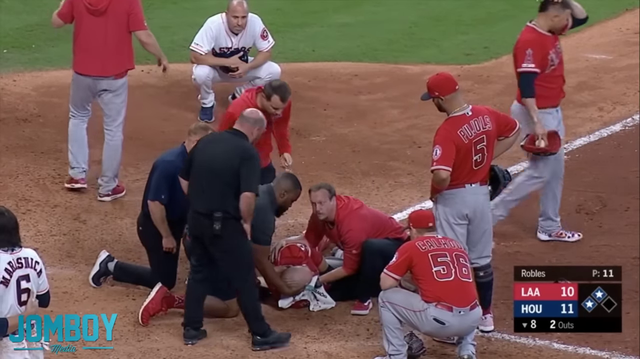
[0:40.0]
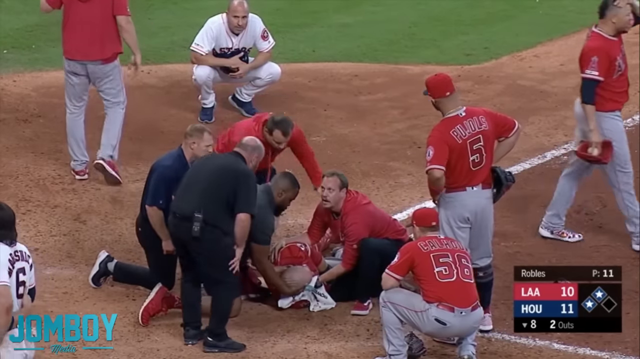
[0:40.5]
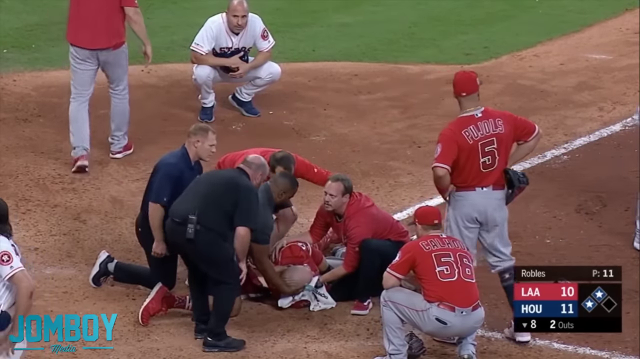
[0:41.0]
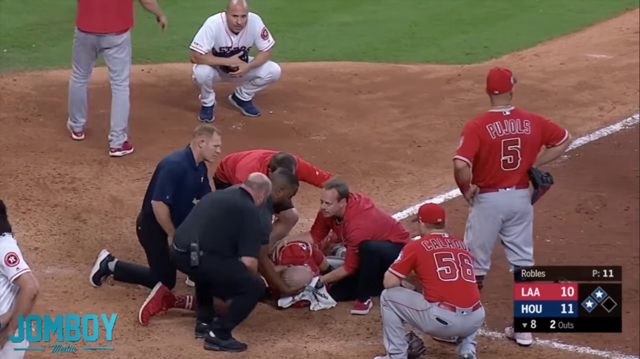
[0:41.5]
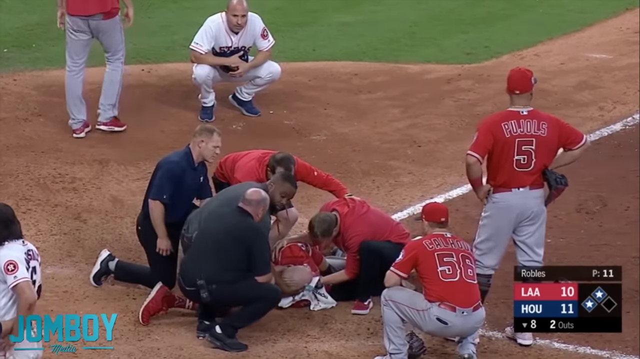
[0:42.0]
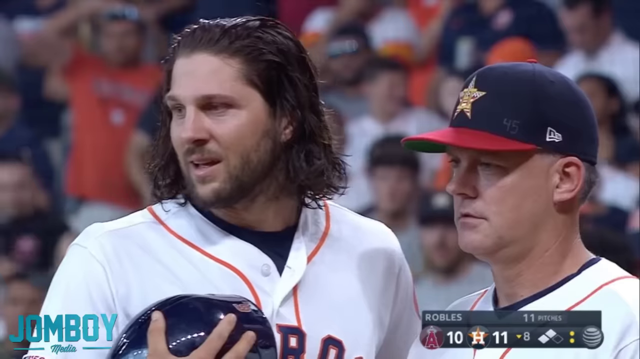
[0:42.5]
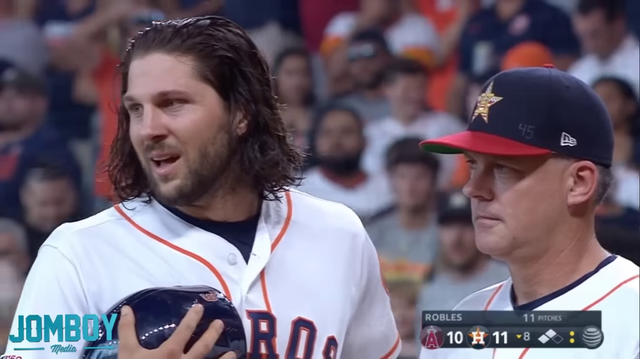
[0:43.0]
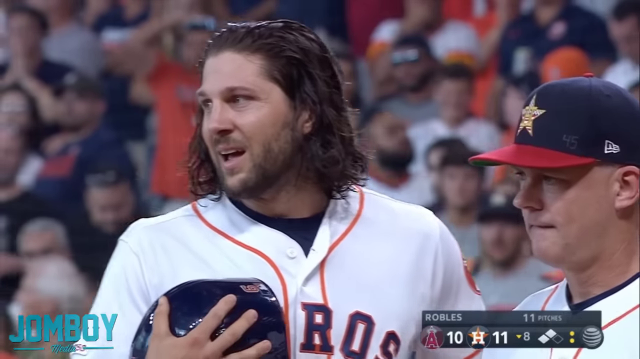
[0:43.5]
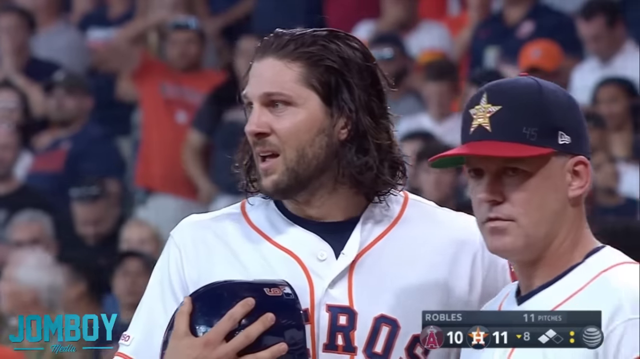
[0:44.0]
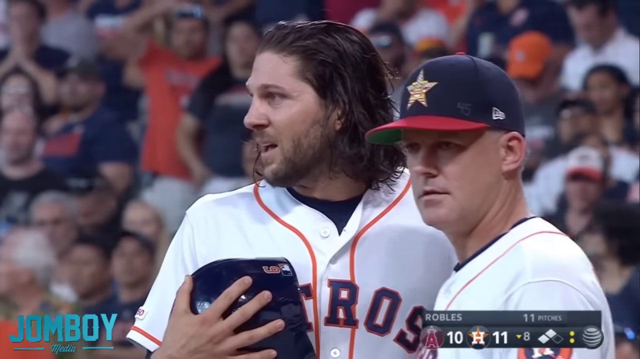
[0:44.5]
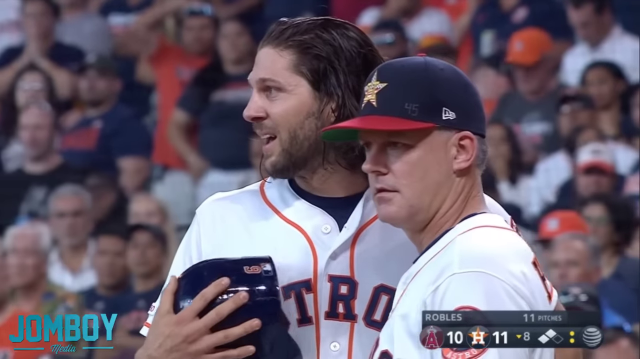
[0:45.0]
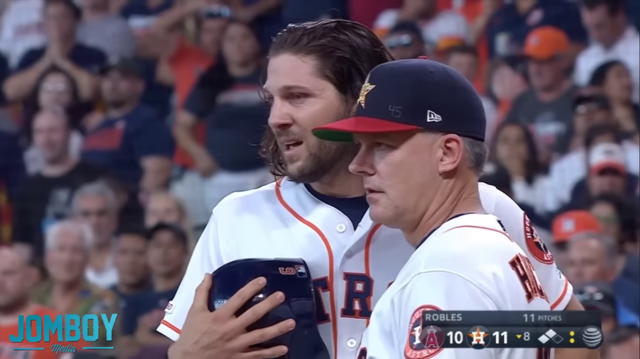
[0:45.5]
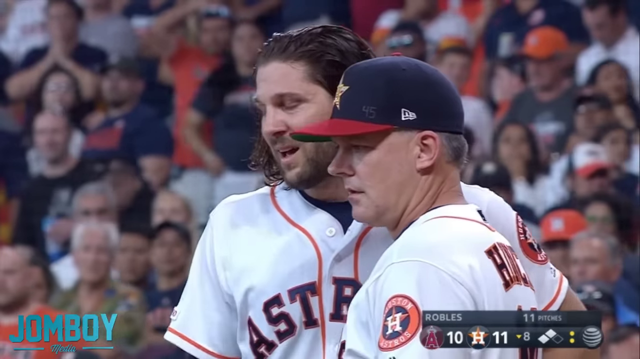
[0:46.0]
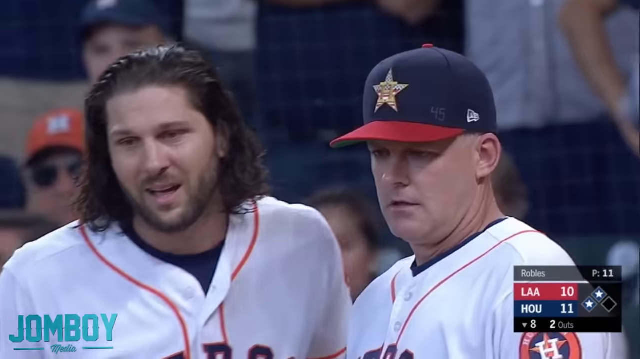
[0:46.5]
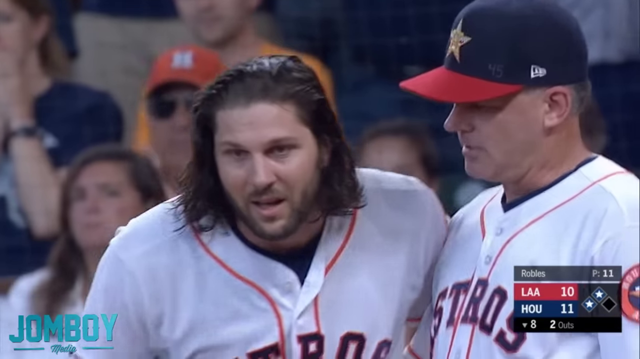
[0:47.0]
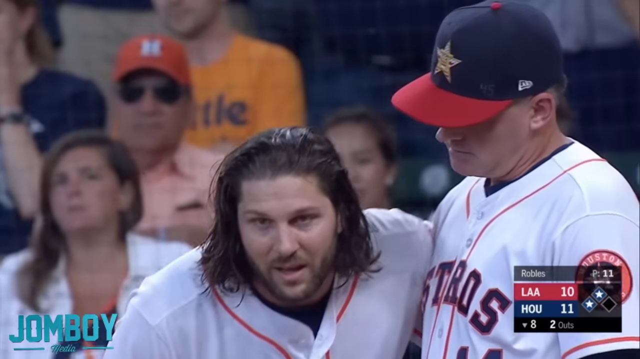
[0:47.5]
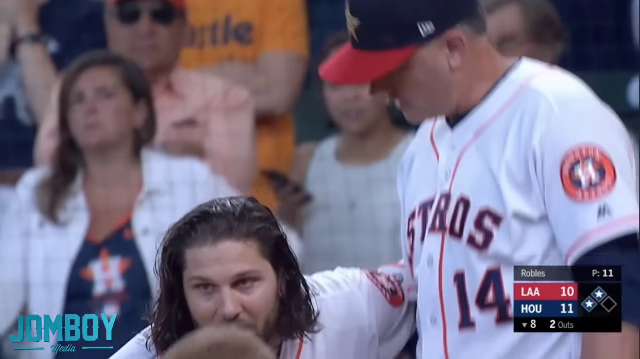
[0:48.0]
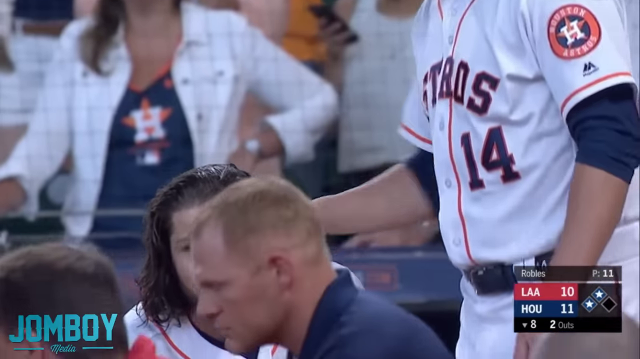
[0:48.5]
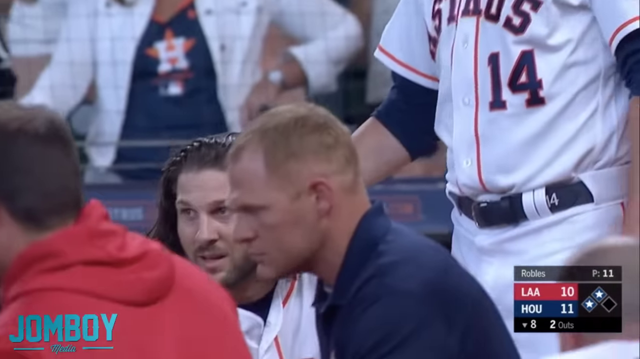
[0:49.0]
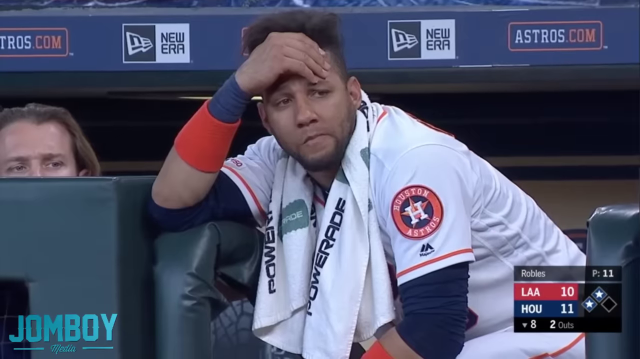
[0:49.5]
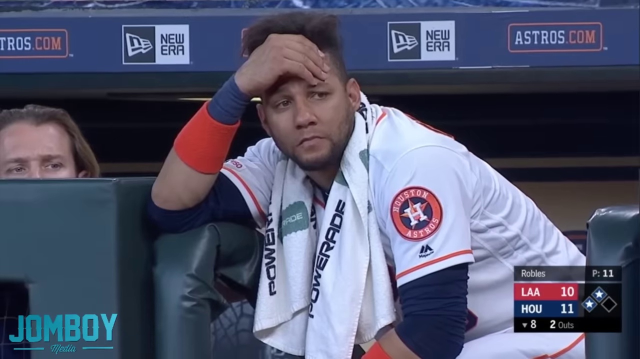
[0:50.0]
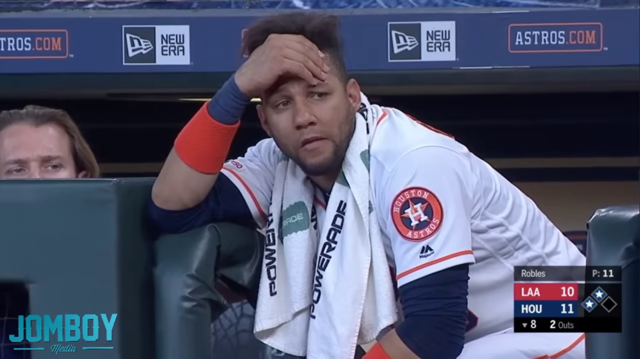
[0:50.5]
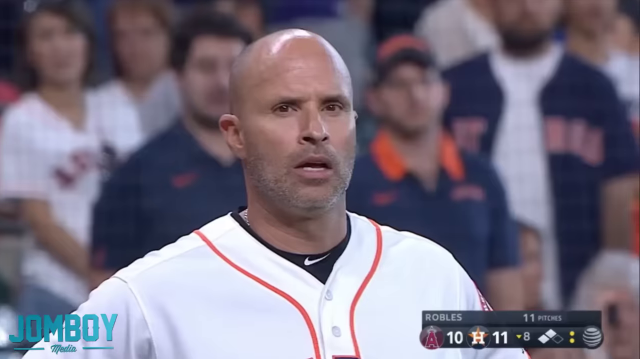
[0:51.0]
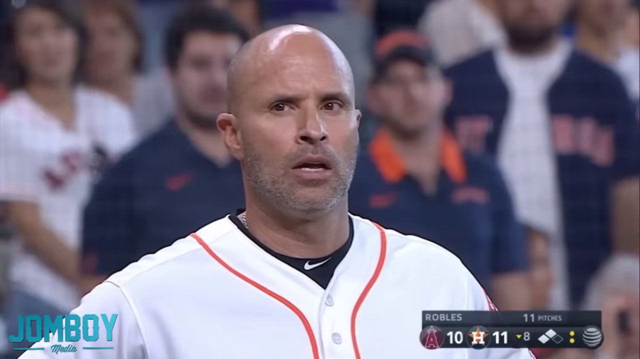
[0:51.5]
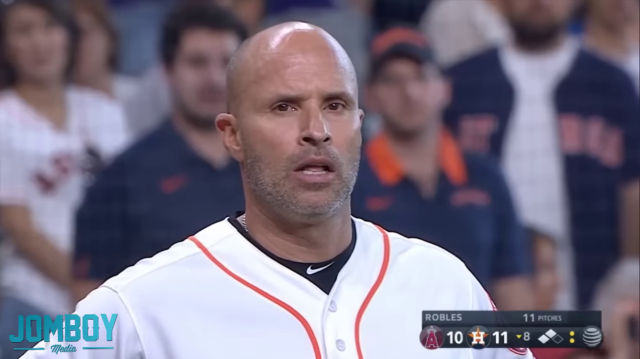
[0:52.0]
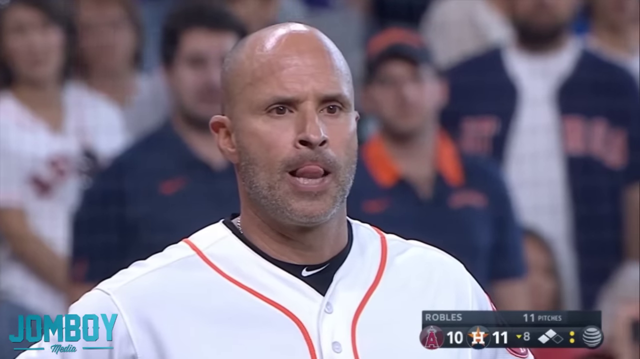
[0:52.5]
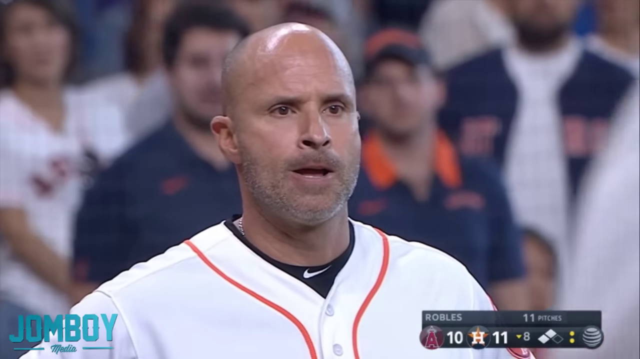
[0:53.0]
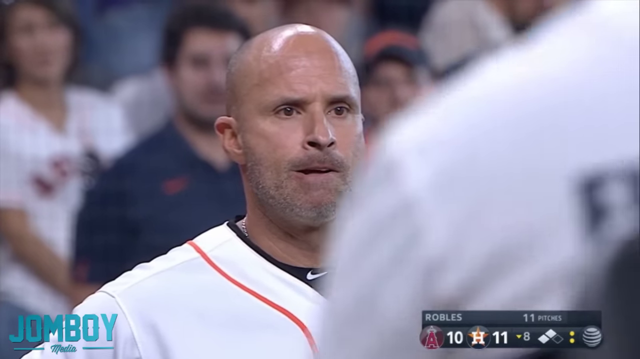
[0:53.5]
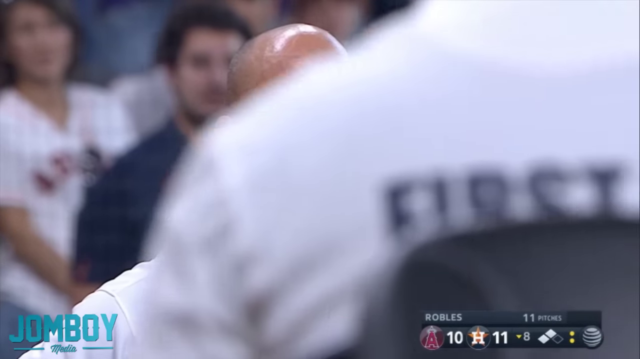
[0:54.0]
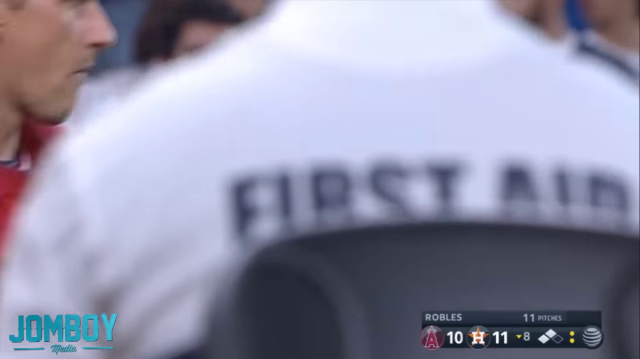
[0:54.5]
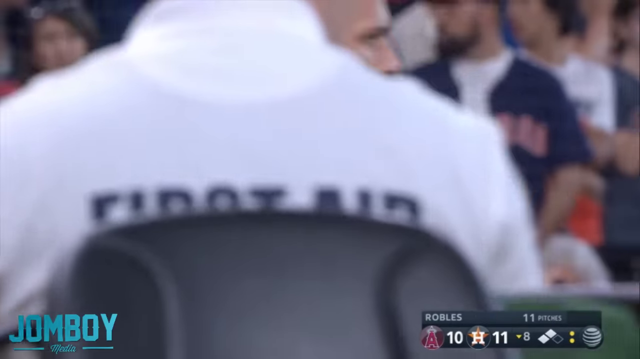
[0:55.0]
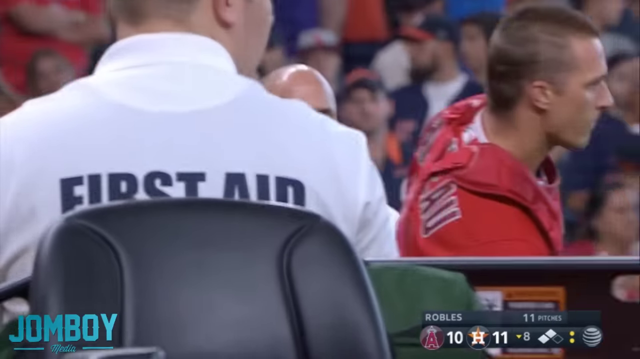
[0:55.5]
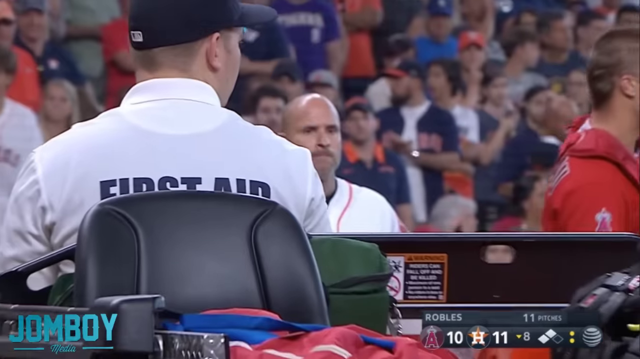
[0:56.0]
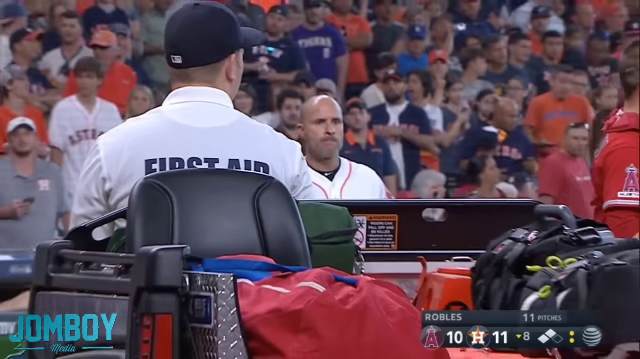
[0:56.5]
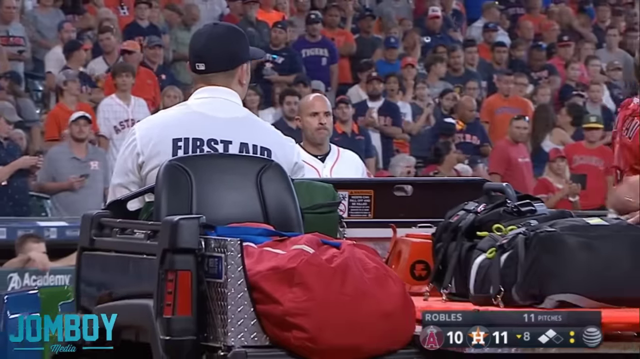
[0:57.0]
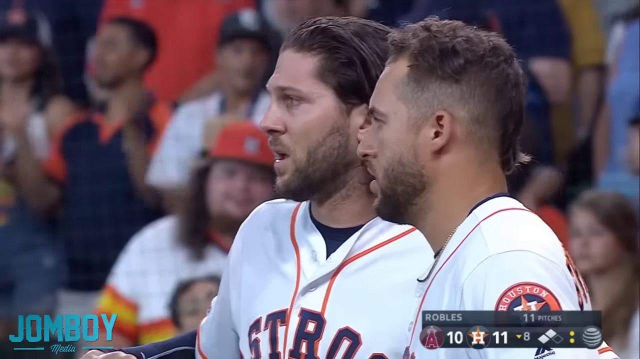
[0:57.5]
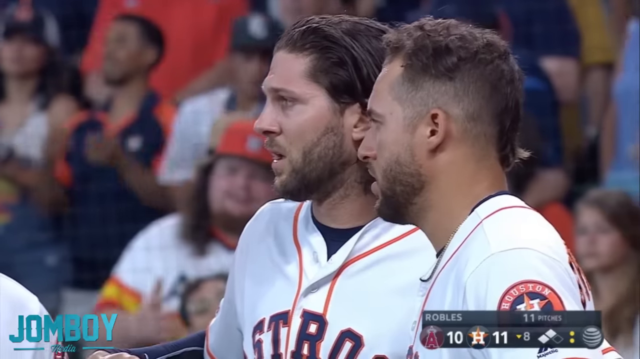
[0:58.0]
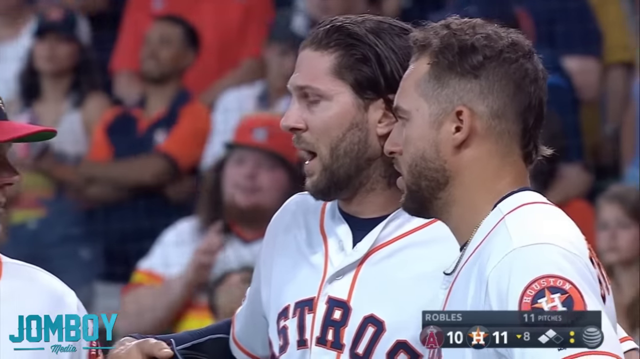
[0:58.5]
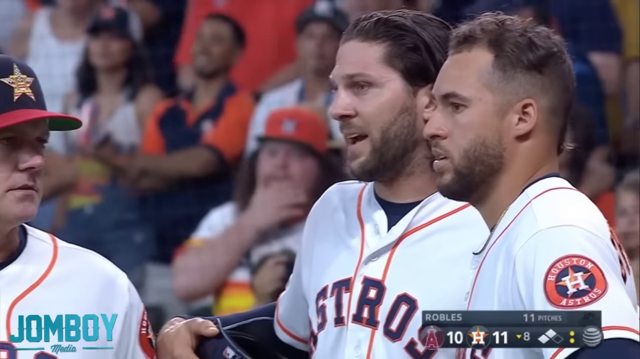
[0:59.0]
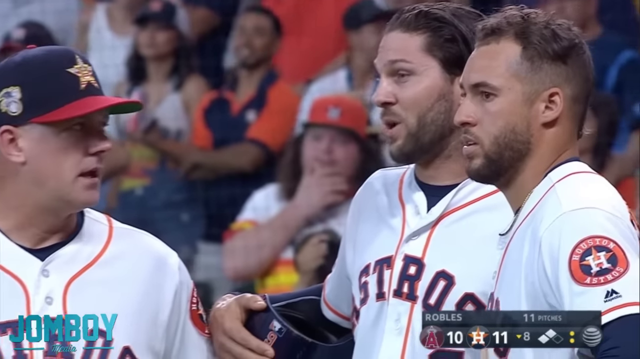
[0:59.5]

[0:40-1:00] Teammates and medical staff continue checking on the injured player, and the camera zooms in on the player who ran into him, who looks upset. Players from both teams look shocked and concerned. A man wears a shirt that says "first aid". Near the injured player, red-team jerseys show numbers 57 and 5, and on the other team numbers 6 and 14 are visible. Everyone looks confused. A patch on the arm shows the Houston Astros are the team in mostly white jerseys, while the team in red is labeled LAA. First aid drives a vehicle, not a car, onto the field, something the player can sit or lie in to get off the field.